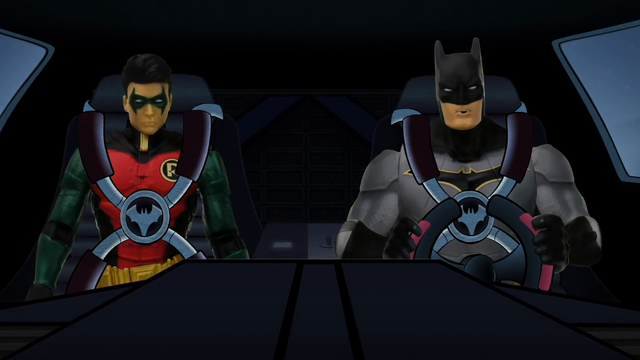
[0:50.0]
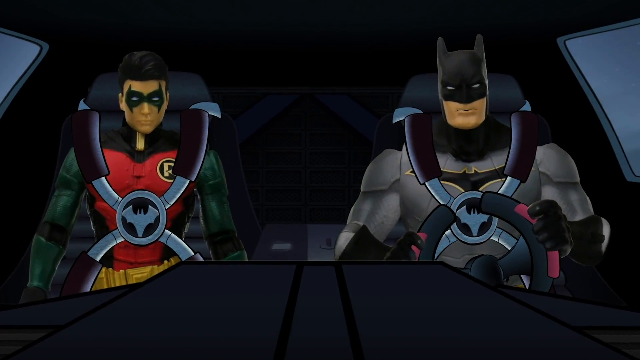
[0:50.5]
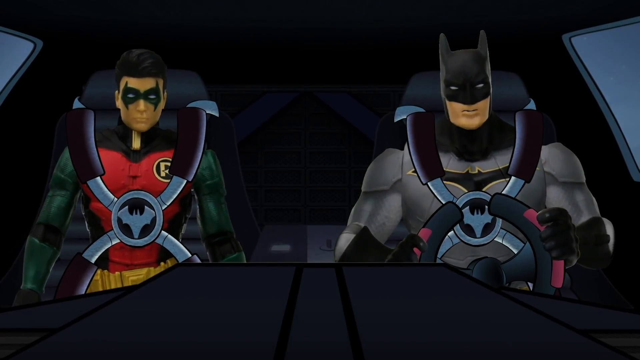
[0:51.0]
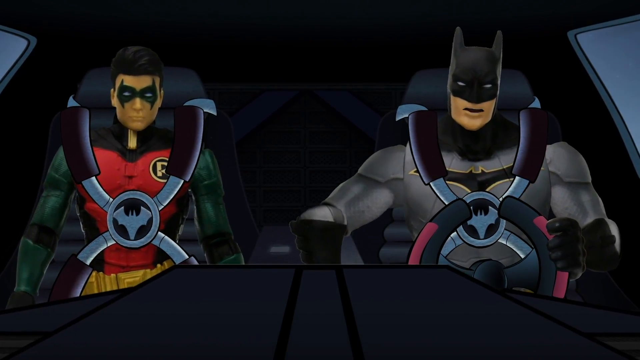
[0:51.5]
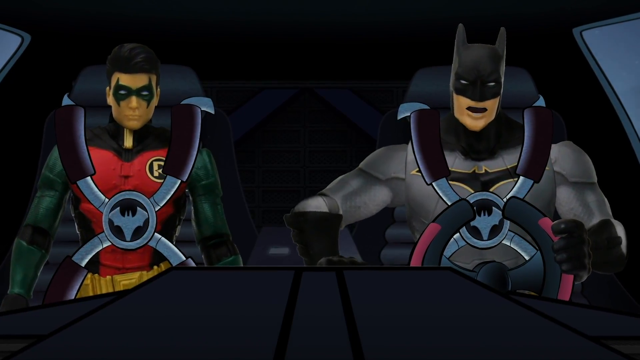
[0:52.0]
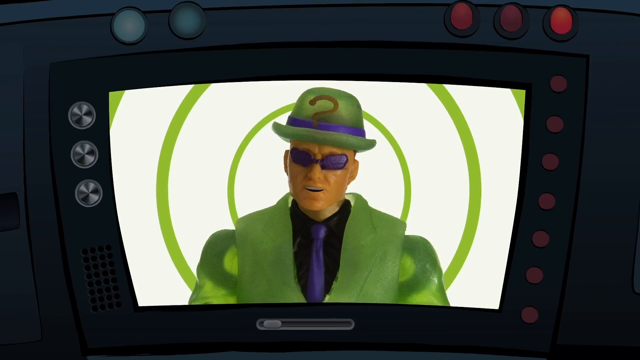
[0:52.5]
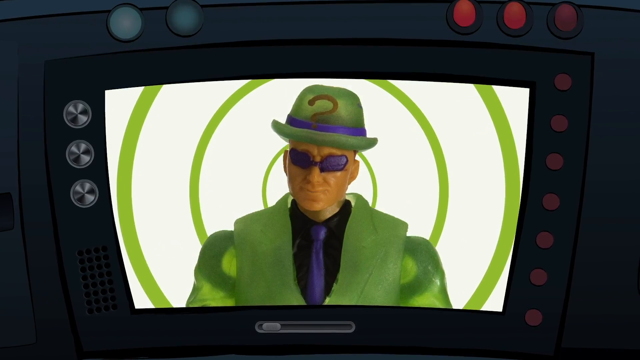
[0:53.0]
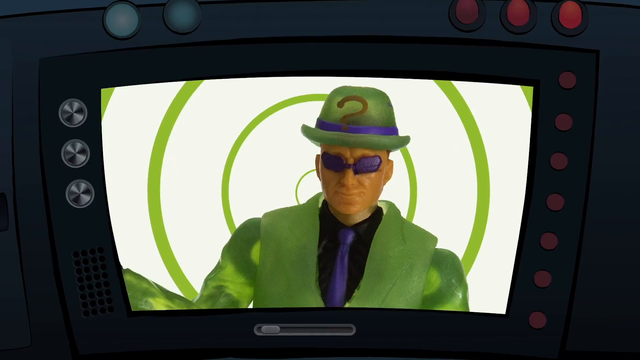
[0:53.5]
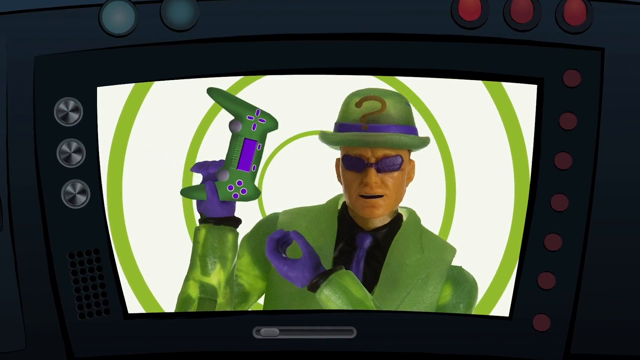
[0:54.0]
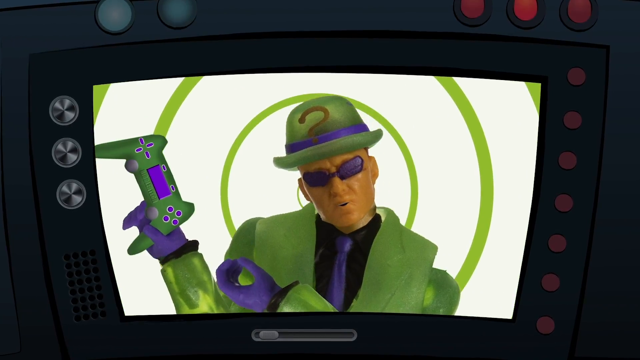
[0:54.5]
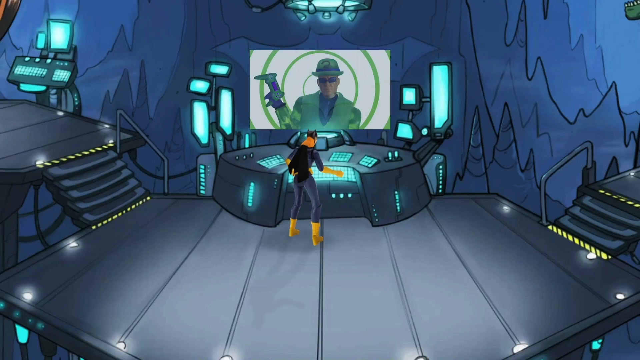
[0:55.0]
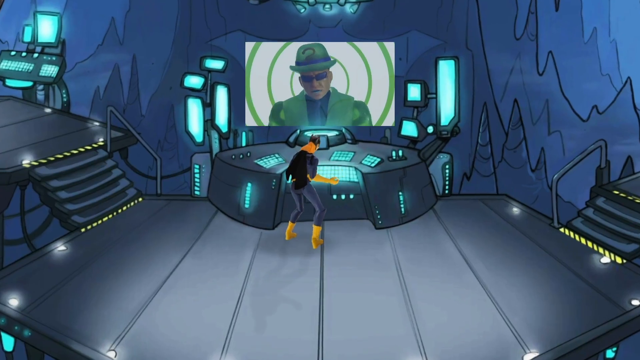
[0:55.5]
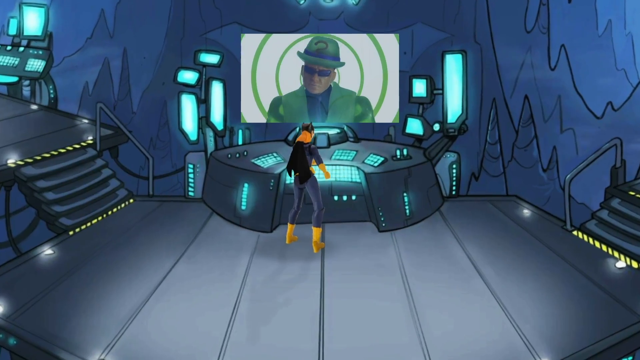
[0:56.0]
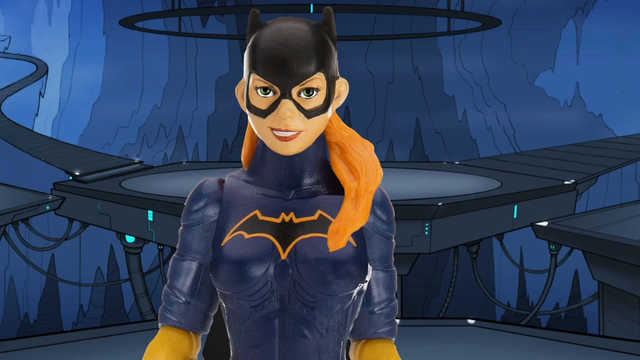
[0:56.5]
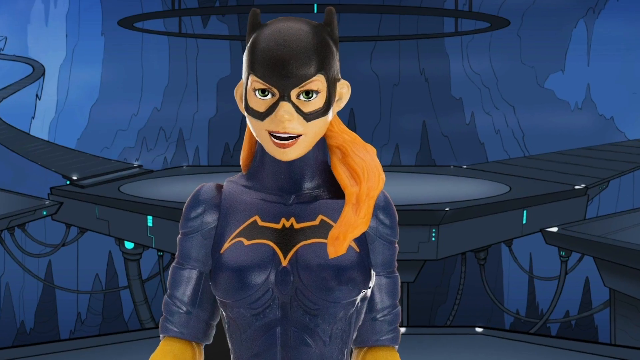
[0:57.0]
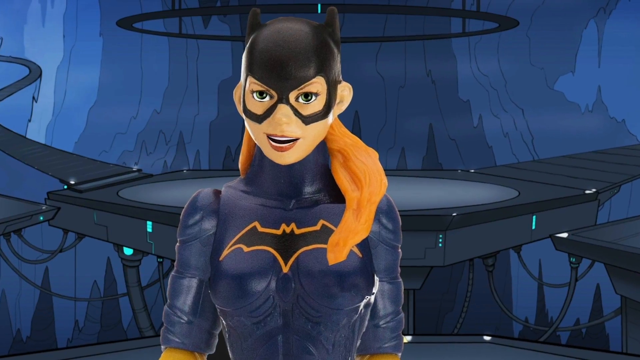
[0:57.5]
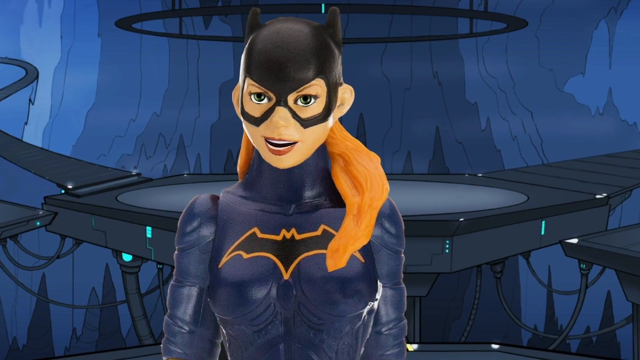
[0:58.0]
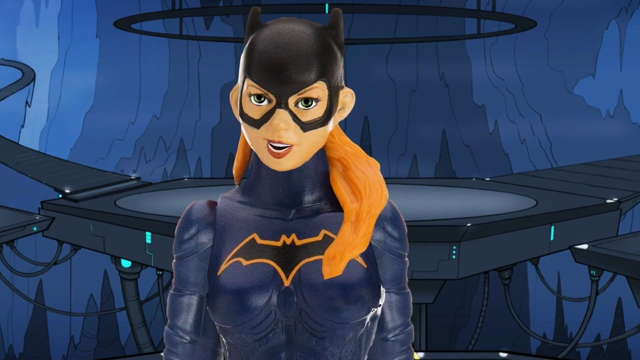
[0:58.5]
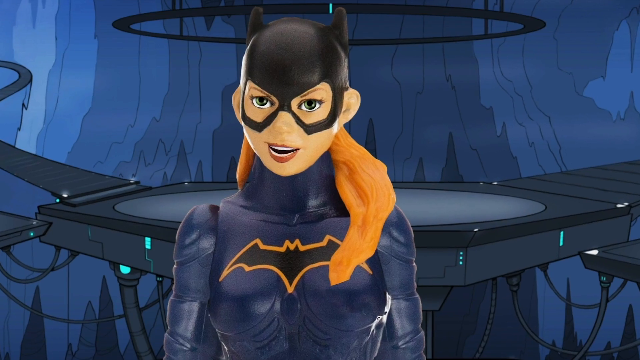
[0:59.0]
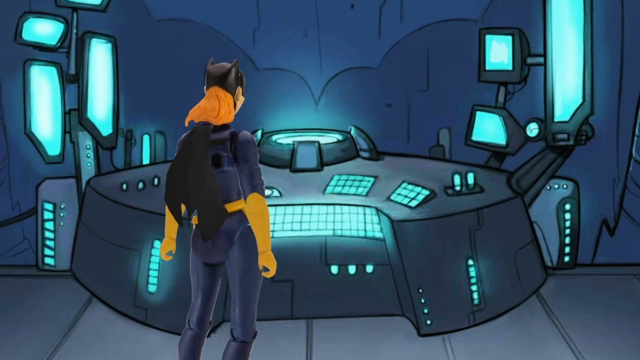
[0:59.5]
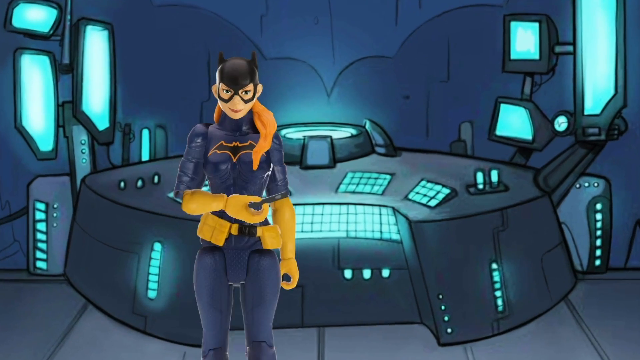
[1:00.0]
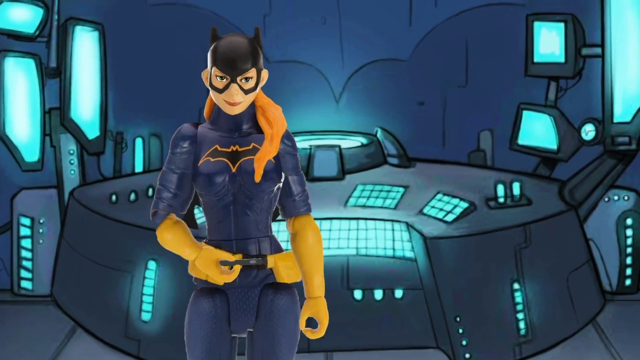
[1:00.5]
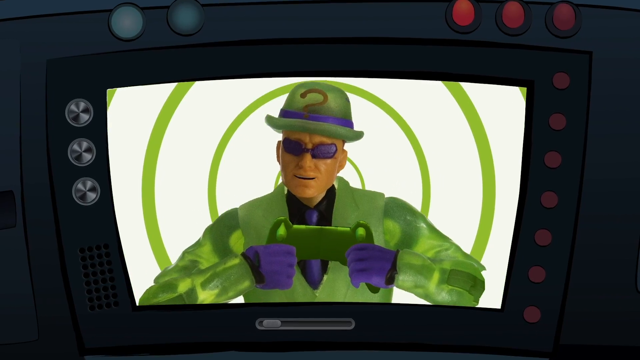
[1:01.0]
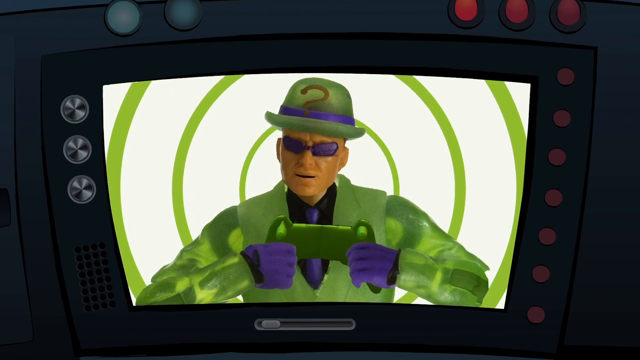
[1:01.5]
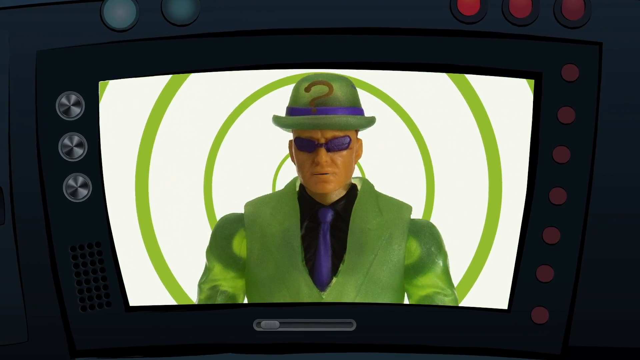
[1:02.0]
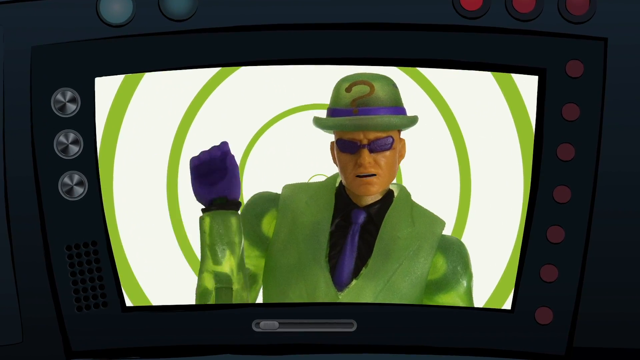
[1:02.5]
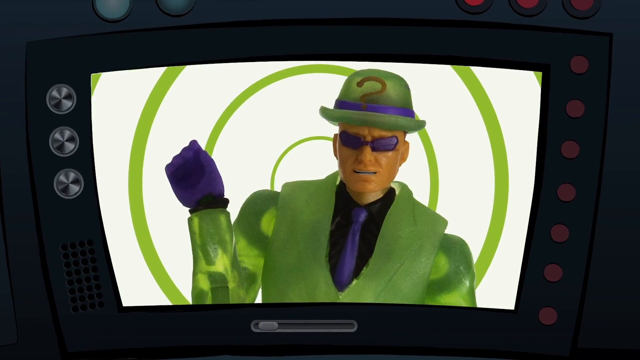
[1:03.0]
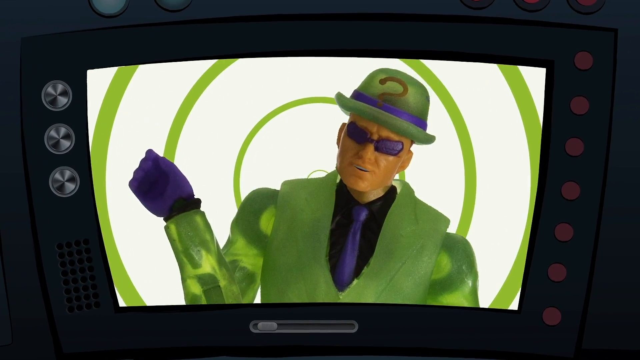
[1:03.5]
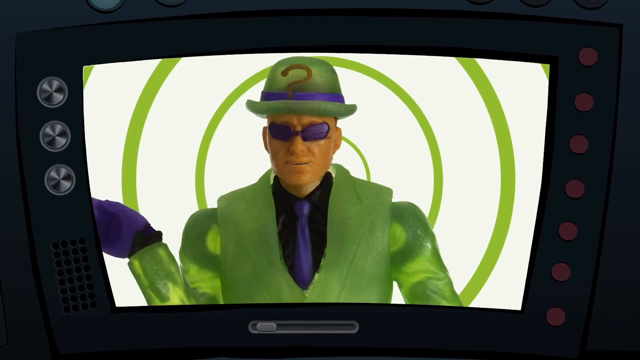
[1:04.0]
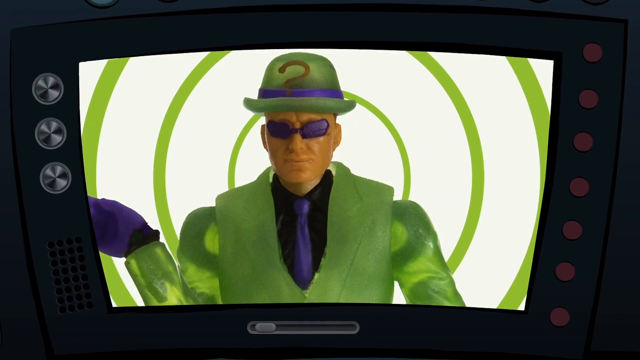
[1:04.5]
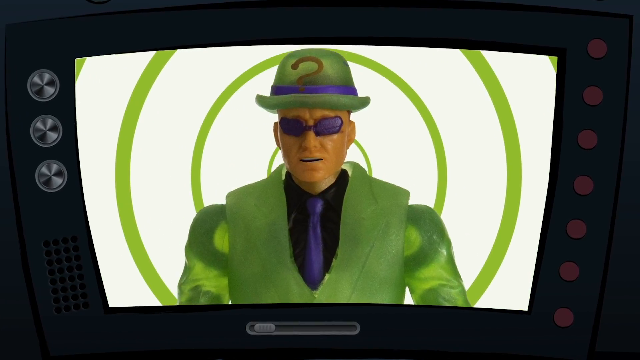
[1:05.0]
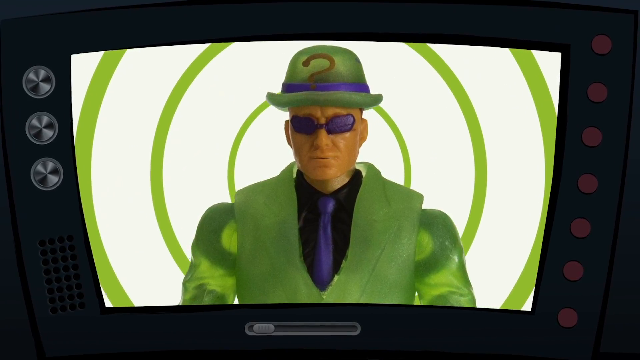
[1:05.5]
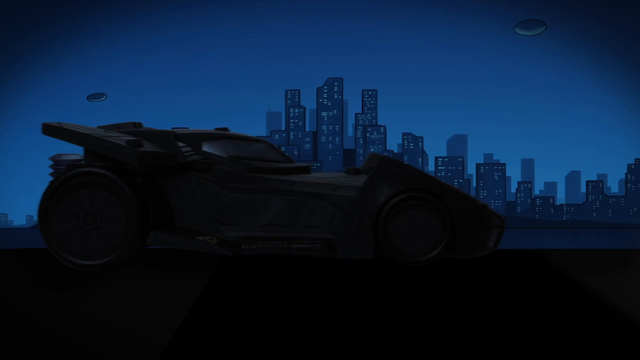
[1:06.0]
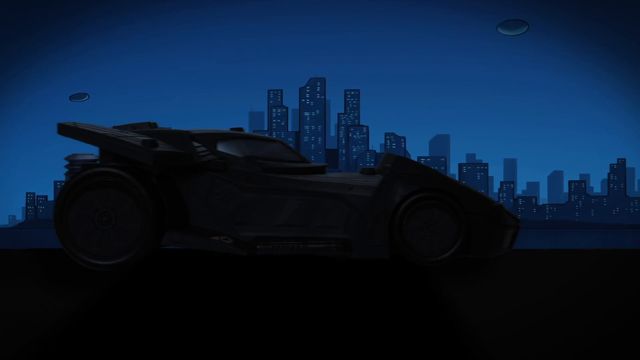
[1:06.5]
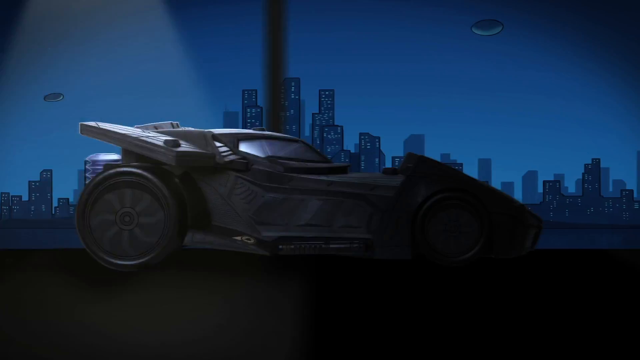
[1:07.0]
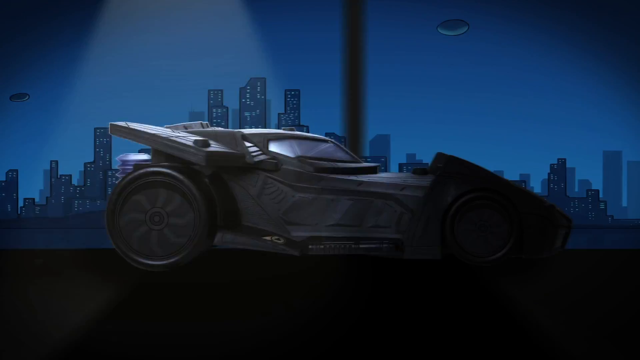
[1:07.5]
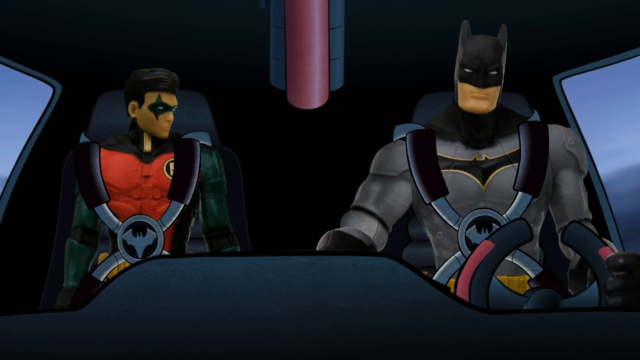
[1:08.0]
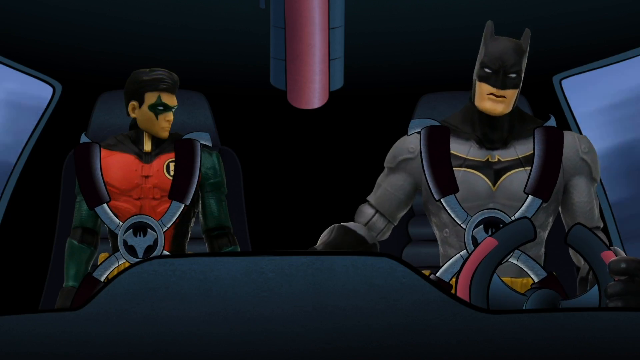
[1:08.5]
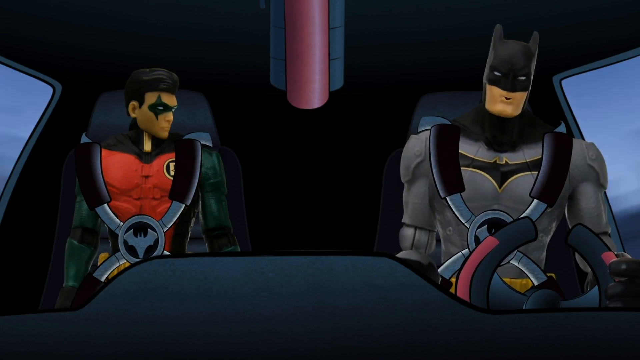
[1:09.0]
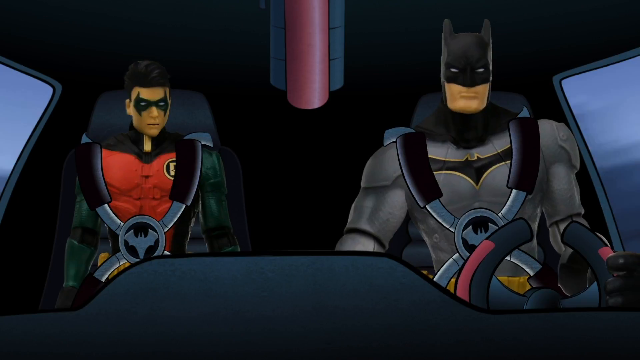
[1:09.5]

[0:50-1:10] Batman and Robin, like action figures or claymation of some sort, are strapped into a 2D Batmobile whose seatbelts and wheels are drawn on. Batman drives the car while Robin is strapped in. Batman talks, and the view goes to the screen inside the Batmobile, which apparently shows the Riddler in front of a hypnotic green and white spiral background. He wears a green suit, purple tie and black shirt, and a green hat with a question mark on it and a purple stripe. He unveils some sort of controller. Batwoman is then shown talking in the Batcave, with a control panel behind her. The view returns to the Riddler, who holds the controller device and talks on the screen inside the Batmobile. The Batmobile then drives past streetlights, and some buttons and gears are seen as Batman drives.